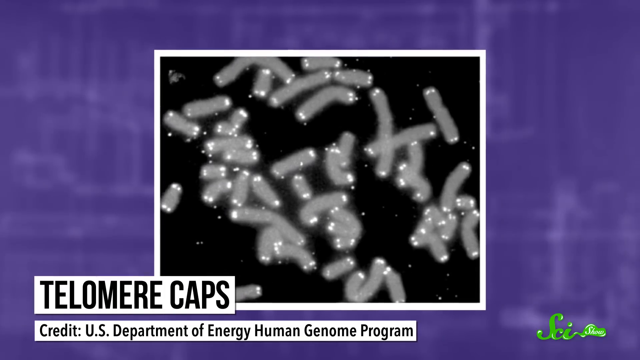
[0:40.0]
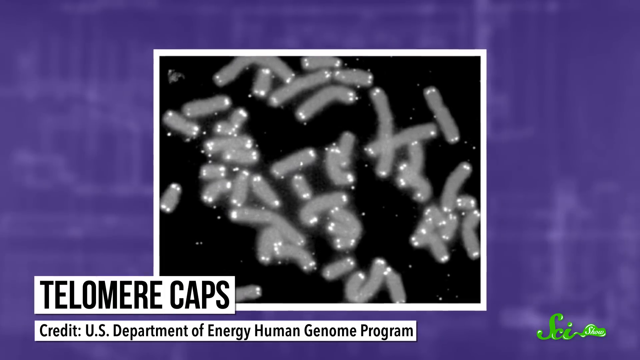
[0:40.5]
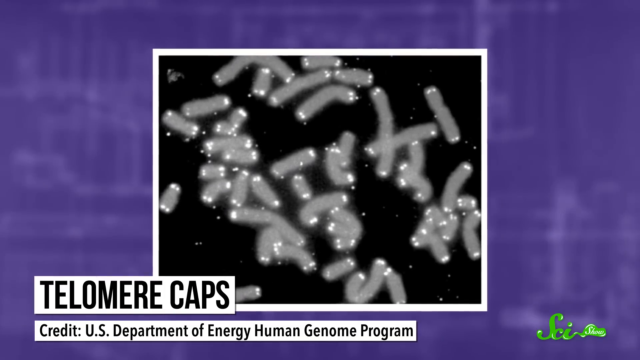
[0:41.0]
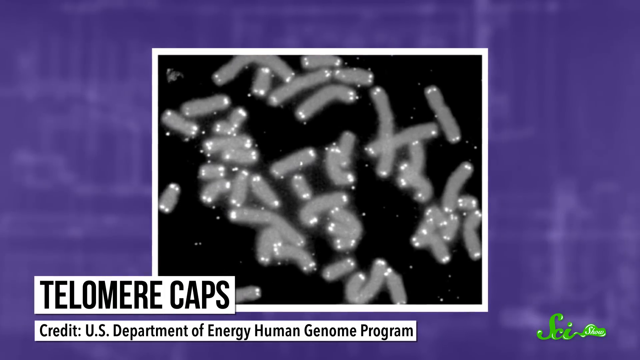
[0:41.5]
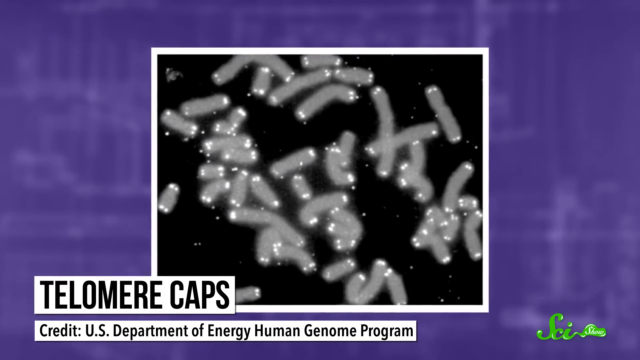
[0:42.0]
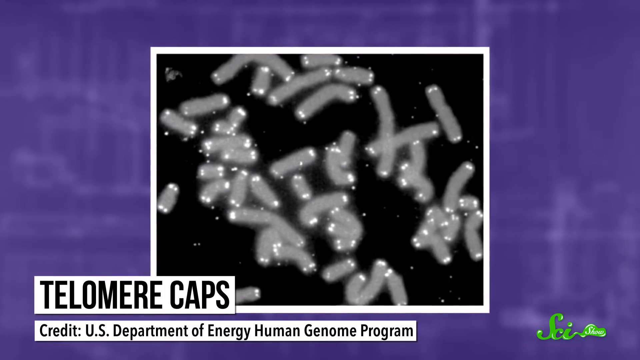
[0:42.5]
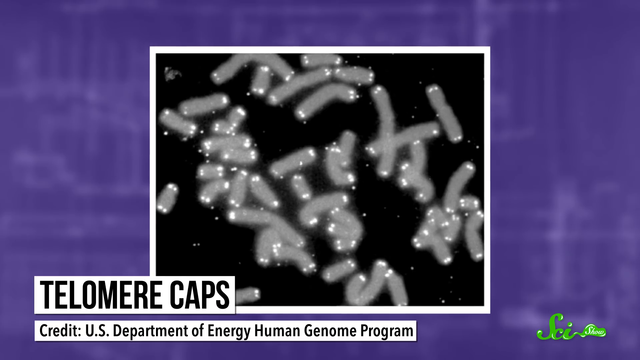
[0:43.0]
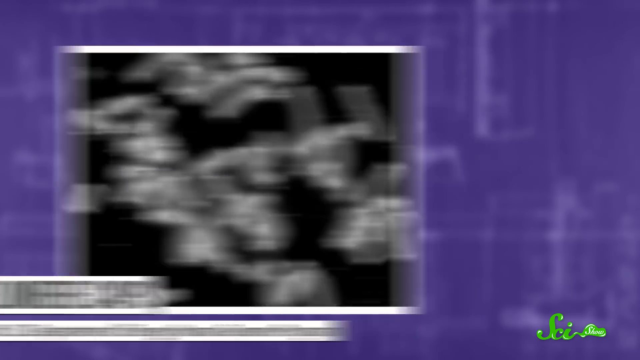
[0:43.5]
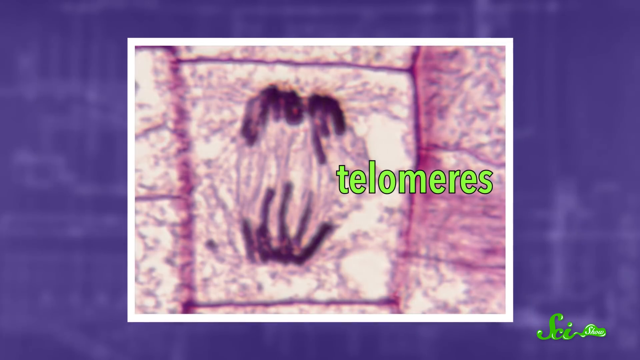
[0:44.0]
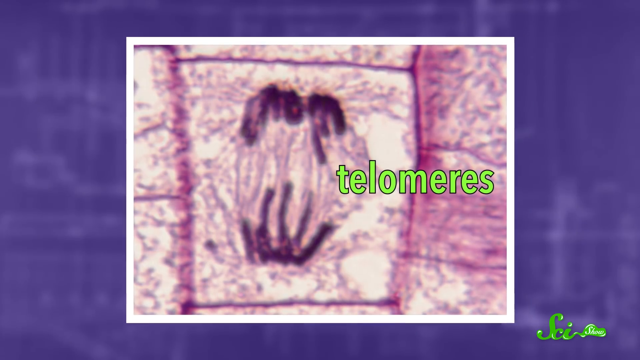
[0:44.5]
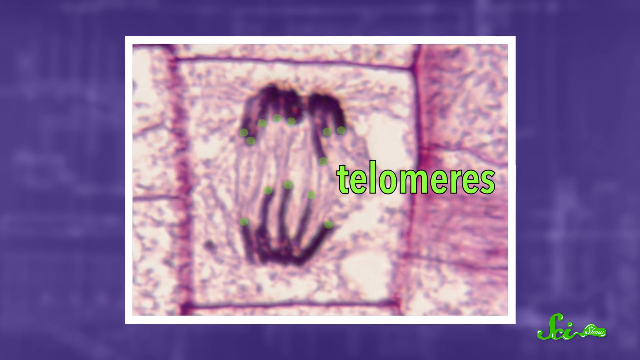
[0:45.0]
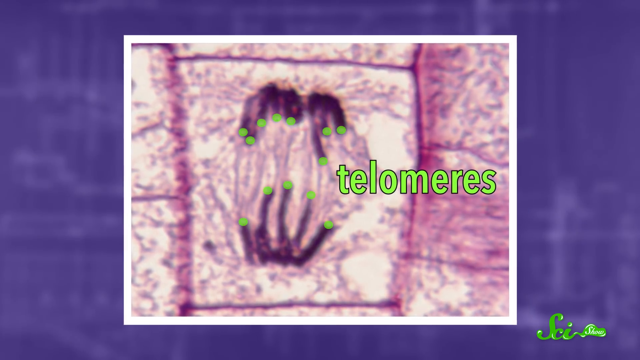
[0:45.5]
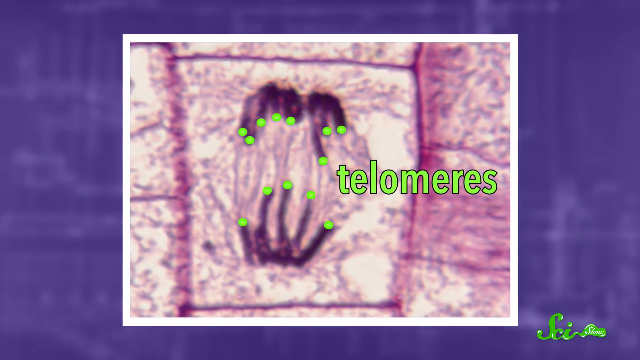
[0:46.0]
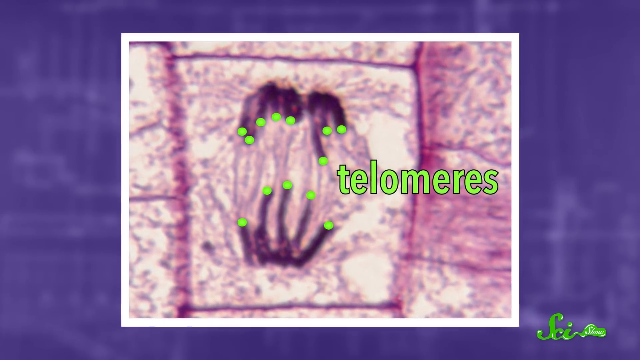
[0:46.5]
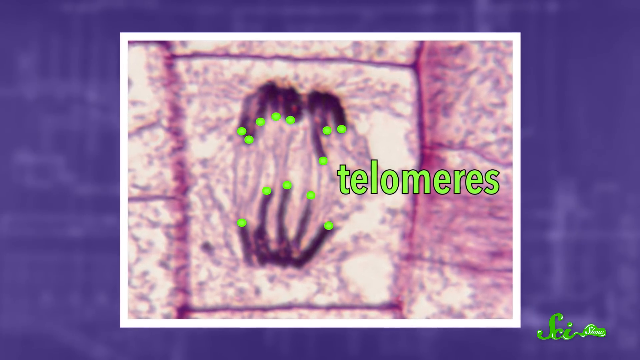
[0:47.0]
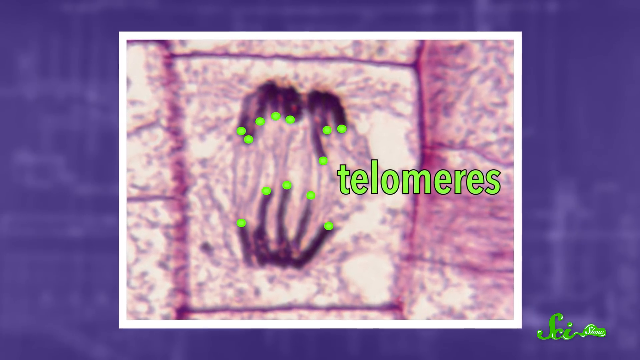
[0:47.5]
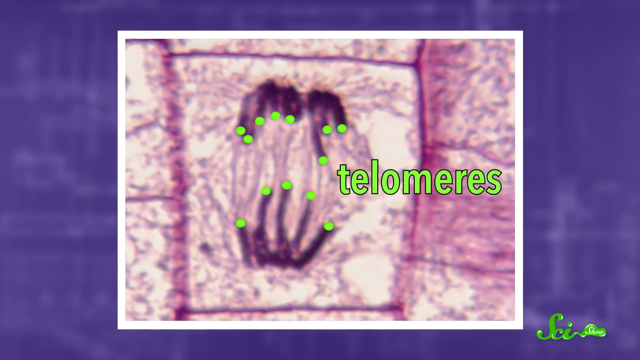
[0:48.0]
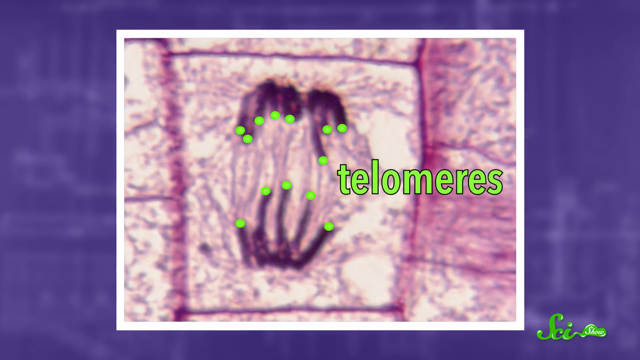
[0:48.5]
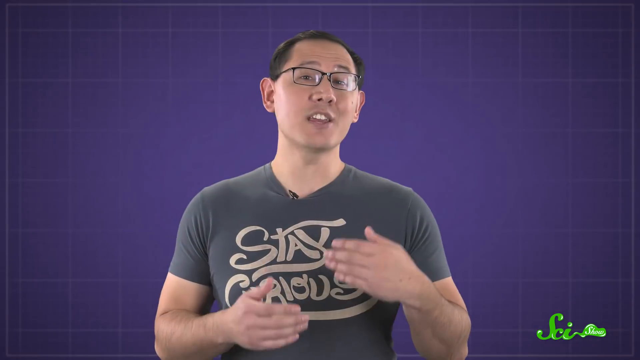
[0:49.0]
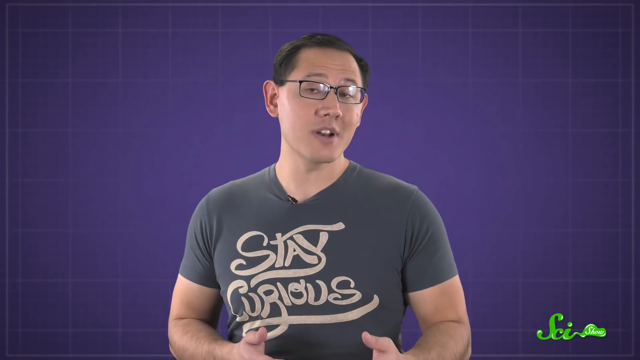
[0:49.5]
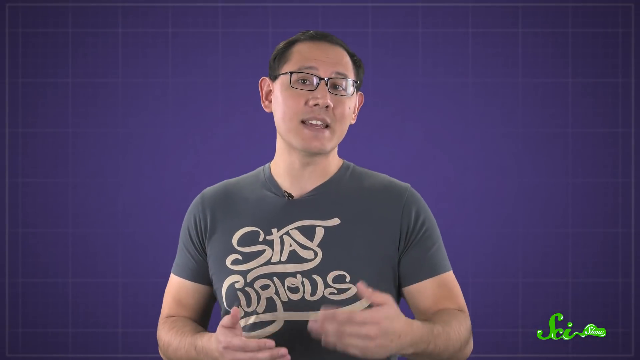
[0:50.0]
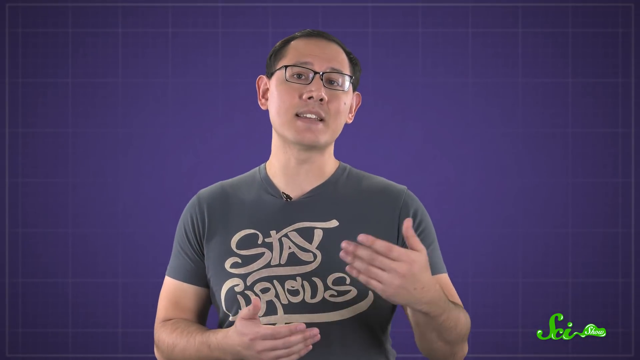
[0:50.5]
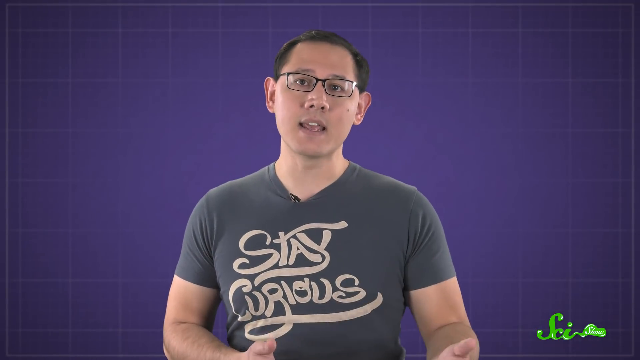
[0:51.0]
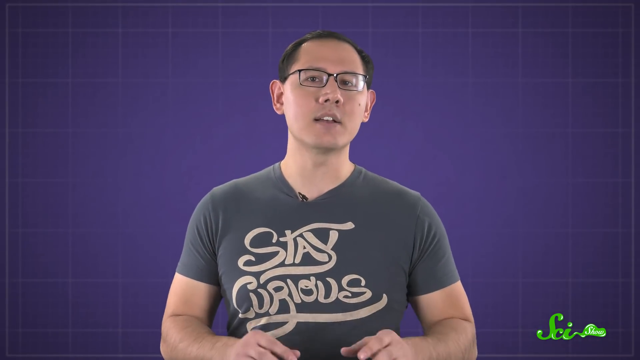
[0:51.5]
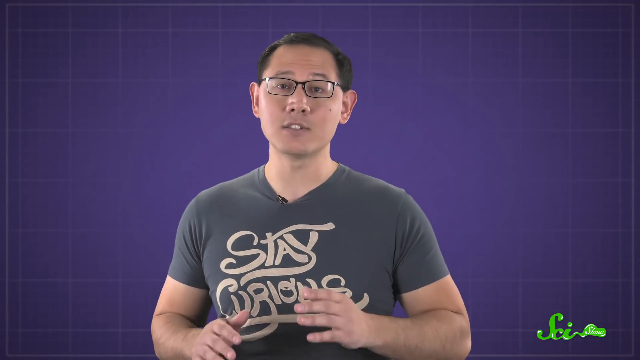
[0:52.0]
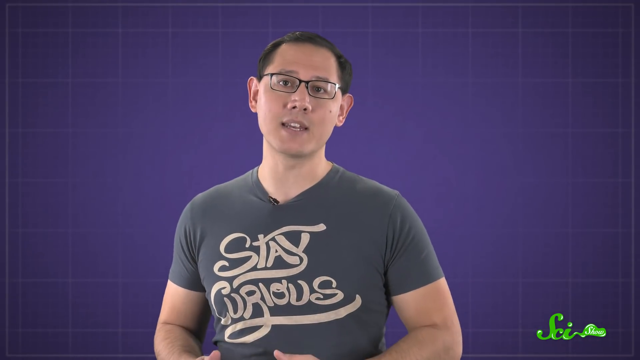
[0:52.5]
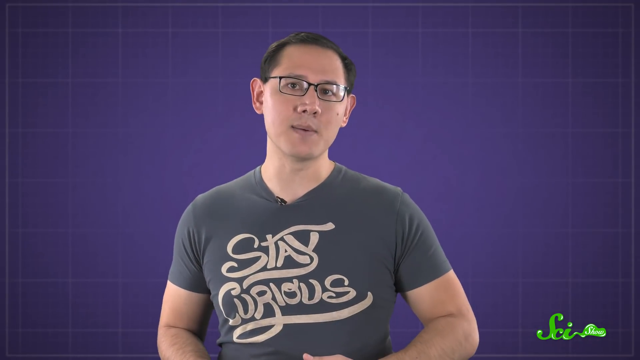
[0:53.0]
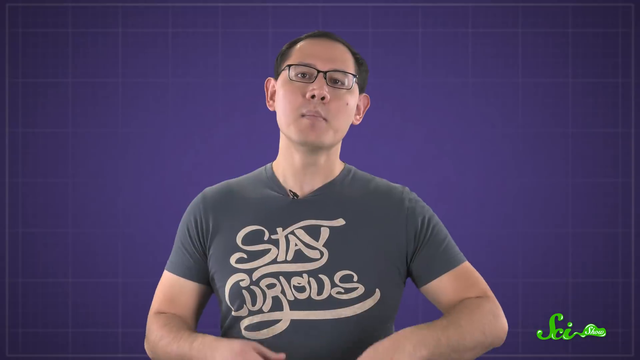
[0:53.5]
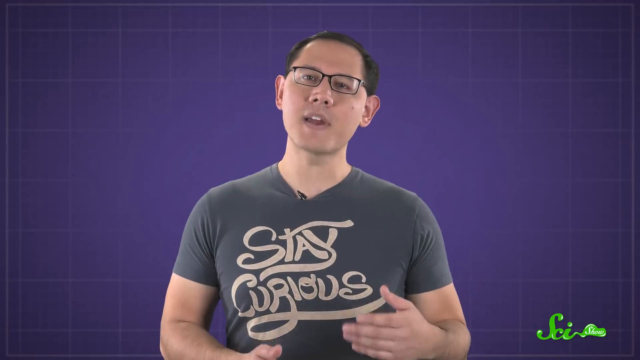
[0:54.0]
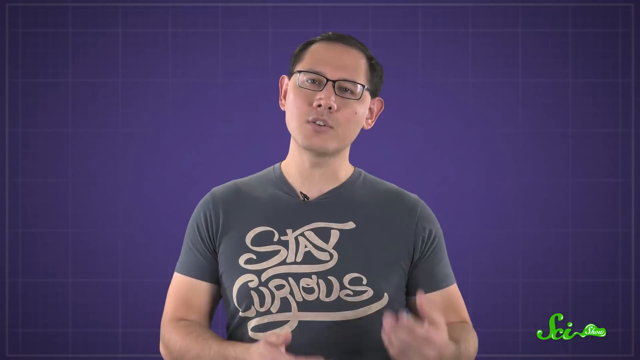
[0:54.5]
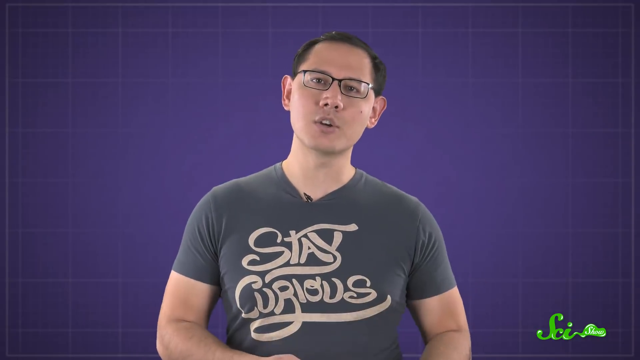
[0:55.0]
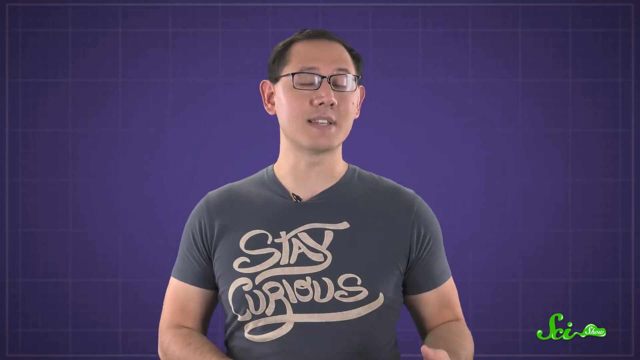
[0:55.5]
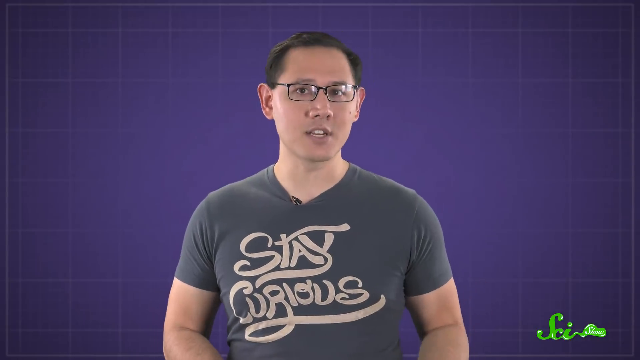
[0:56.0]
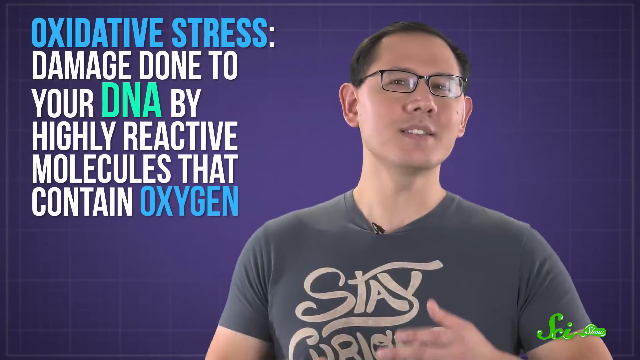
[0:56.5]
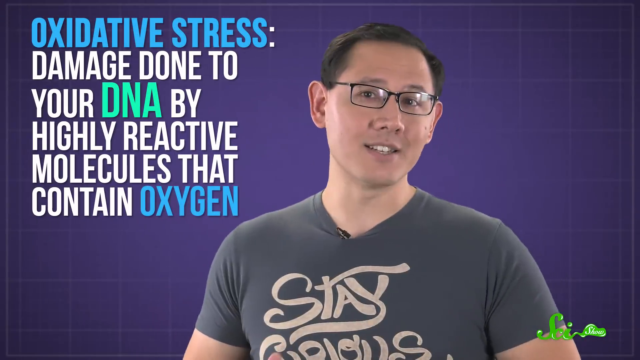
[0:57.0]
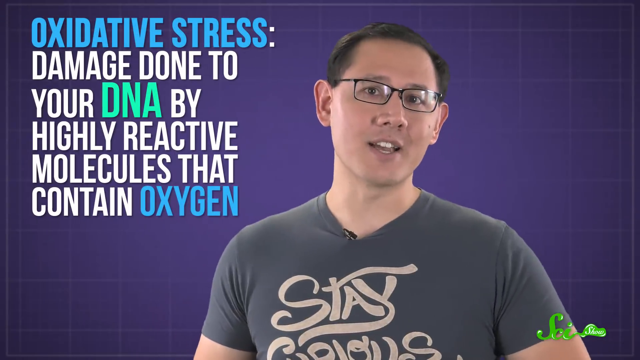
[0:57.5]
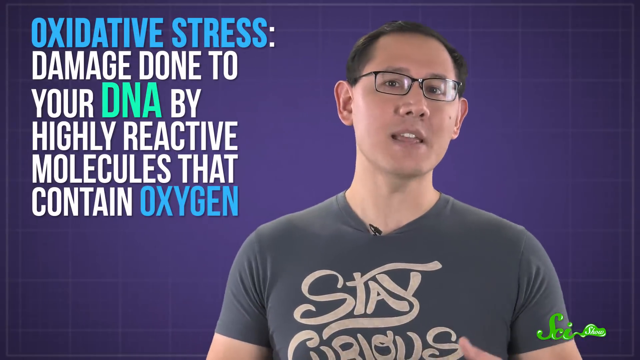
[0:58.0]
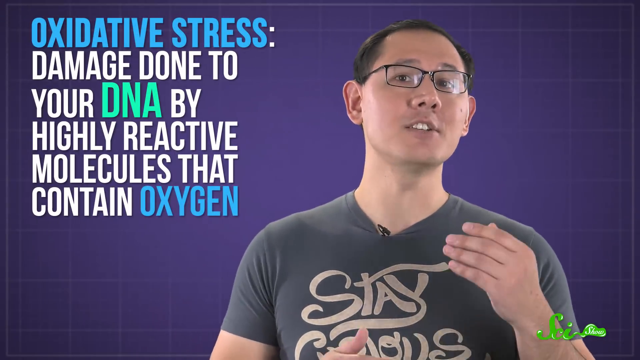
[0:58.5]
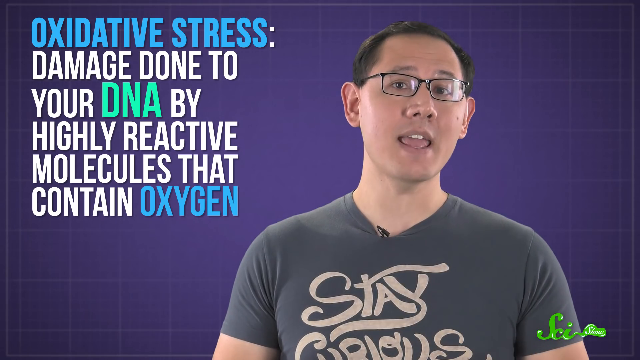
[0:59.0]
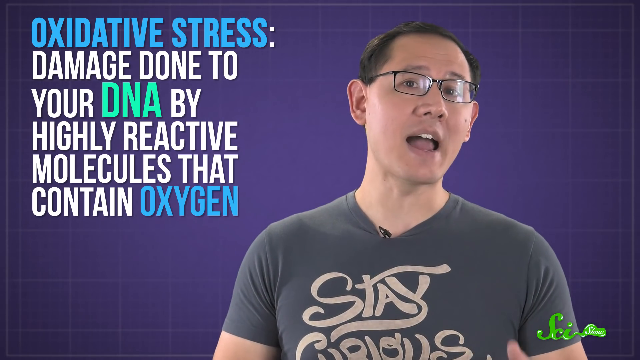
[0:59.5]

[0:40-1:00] A black and white image of several small particles appears against a purple background with the words "Telomere Caps, credit U.S. Department of Energy Human Genome Program." The telomere caps are little white dots on the ends of tube-like structures, strands of DNA, seen inside cells and the cell walls. The image goes away, and the word "telomeres" appears in green as a cell goes through cytokinesis and divides. The man with short black hair, glasses and a gray shirt reading "stay curious" speaks to the camera in front of a purple background. Words on the screen read "oxidative stress damage done to your DNA by highly reactive molecules that contain oxygen," with the word "DNA" in green.